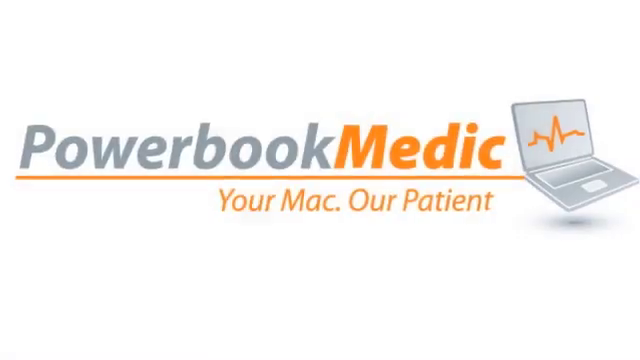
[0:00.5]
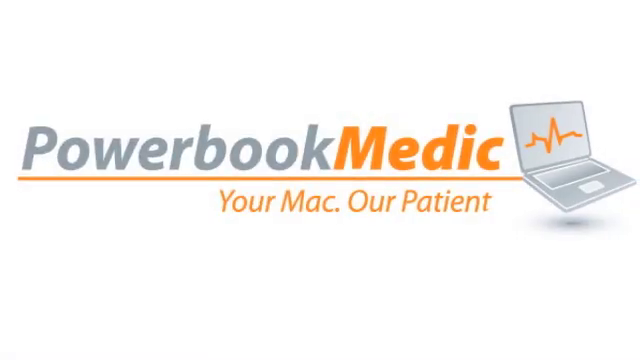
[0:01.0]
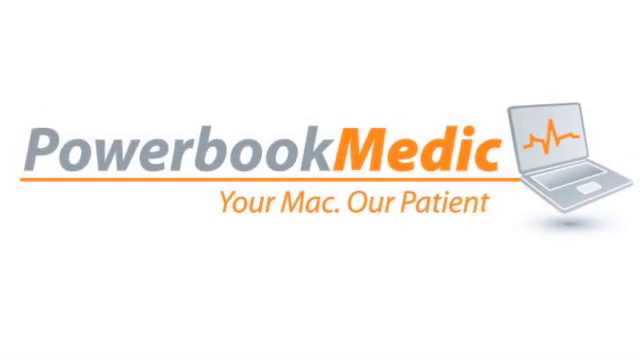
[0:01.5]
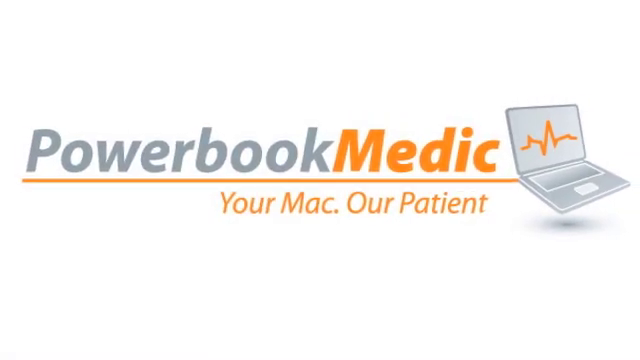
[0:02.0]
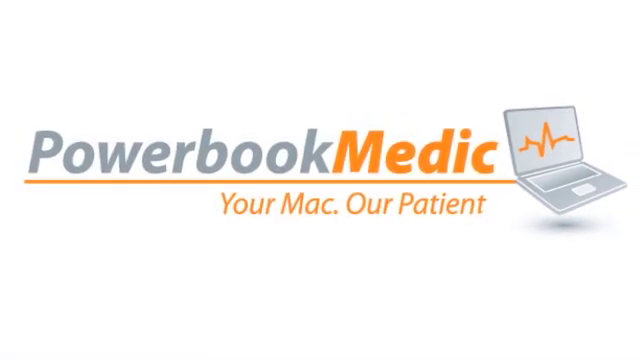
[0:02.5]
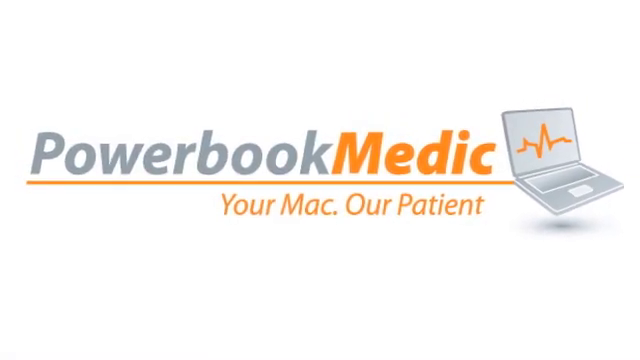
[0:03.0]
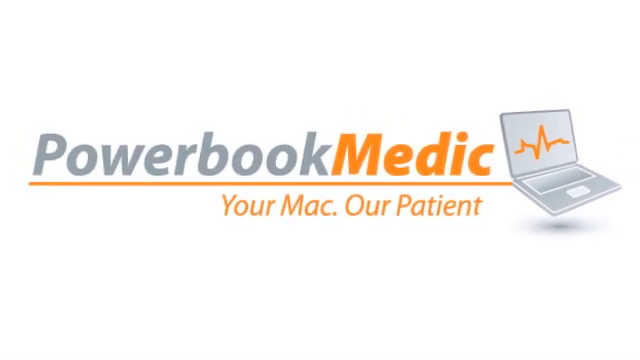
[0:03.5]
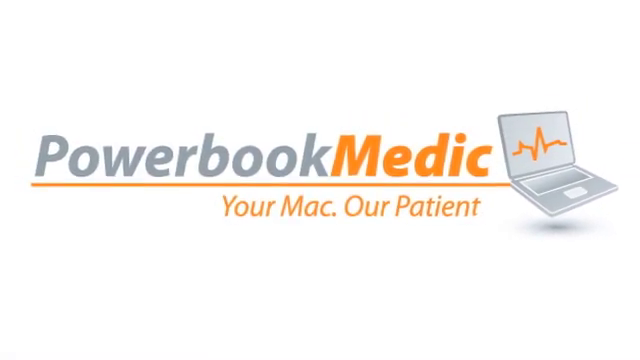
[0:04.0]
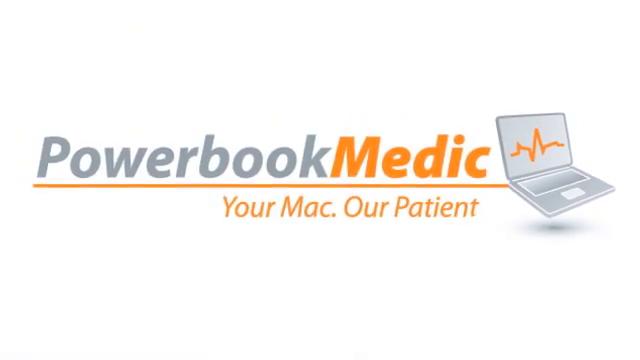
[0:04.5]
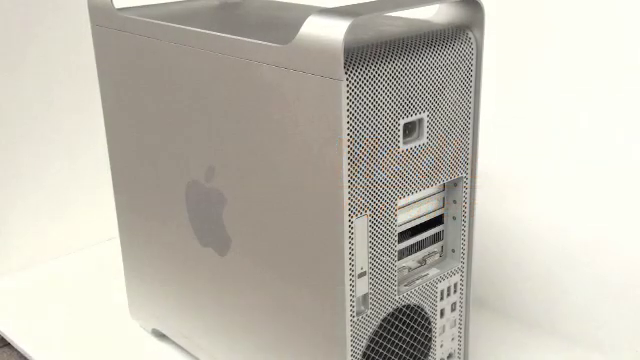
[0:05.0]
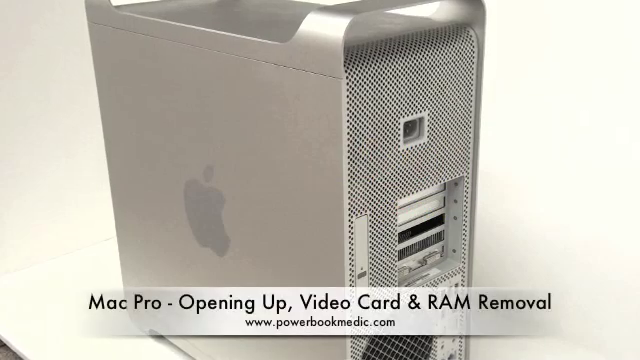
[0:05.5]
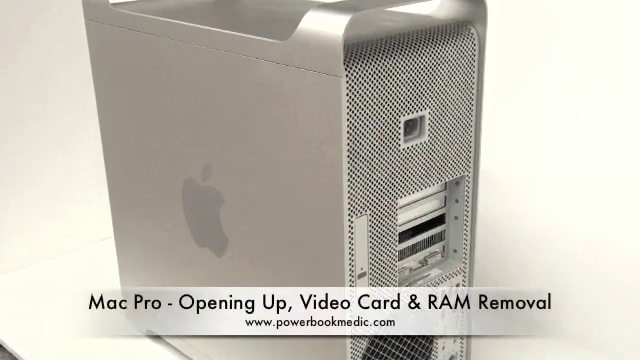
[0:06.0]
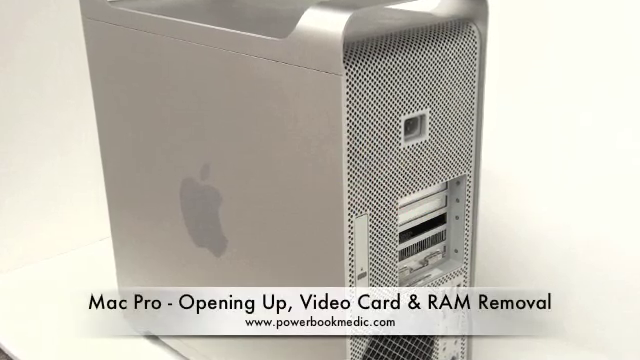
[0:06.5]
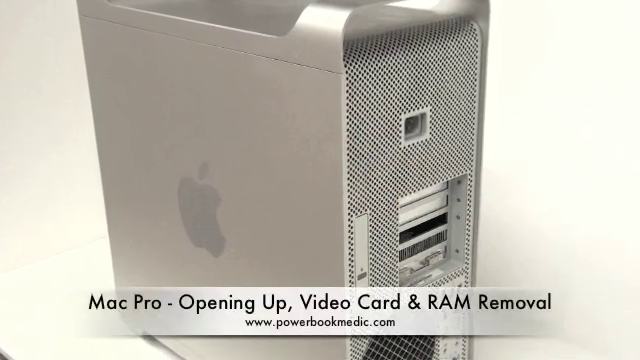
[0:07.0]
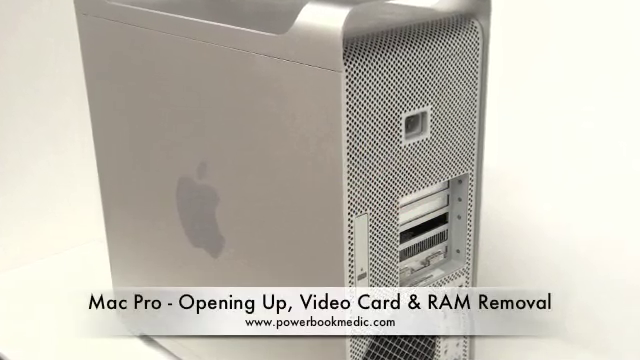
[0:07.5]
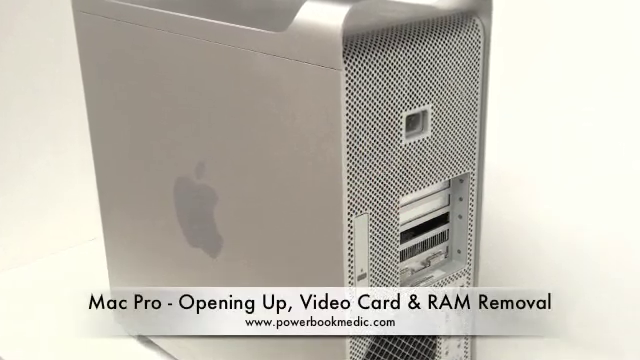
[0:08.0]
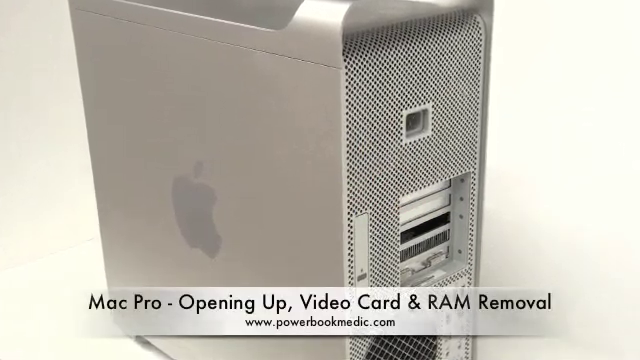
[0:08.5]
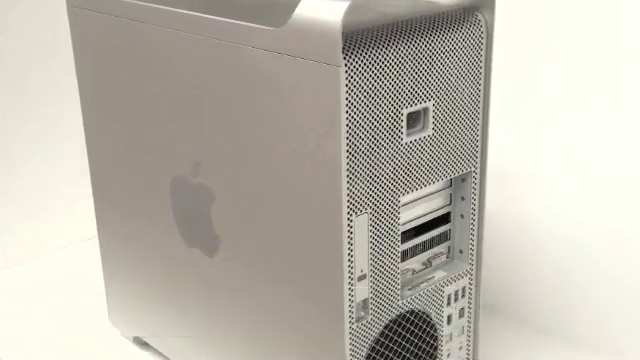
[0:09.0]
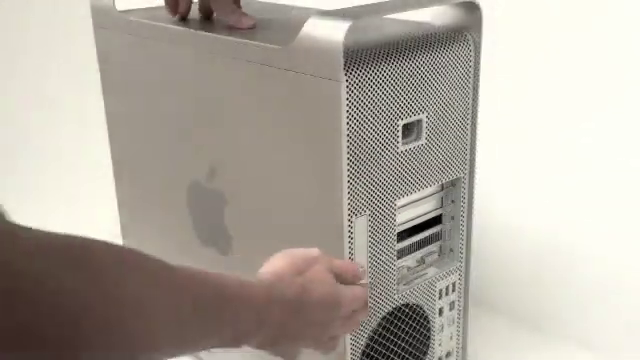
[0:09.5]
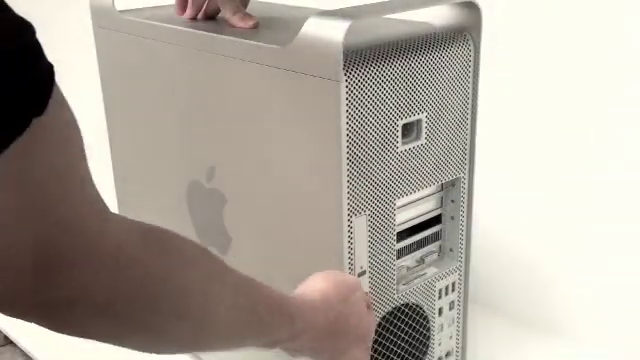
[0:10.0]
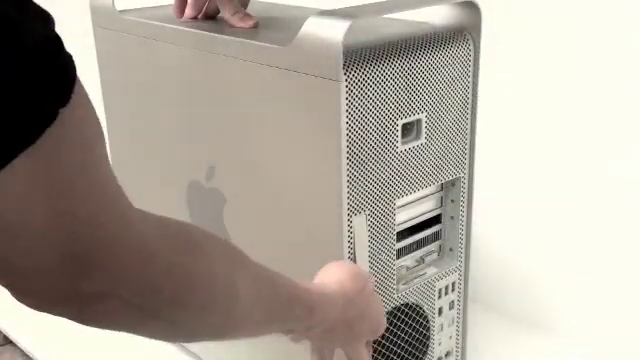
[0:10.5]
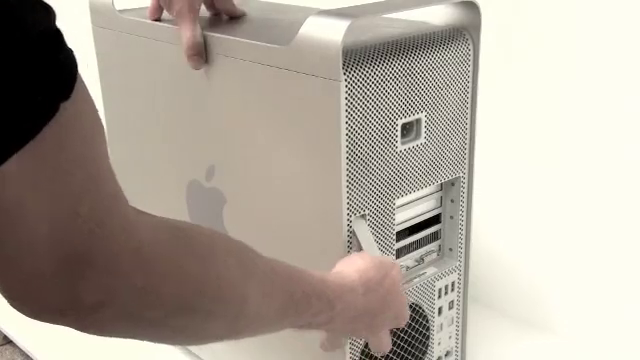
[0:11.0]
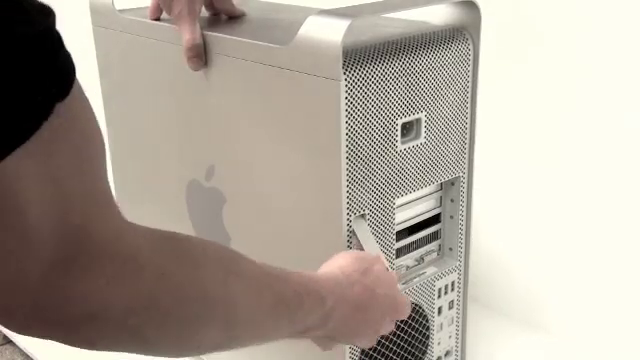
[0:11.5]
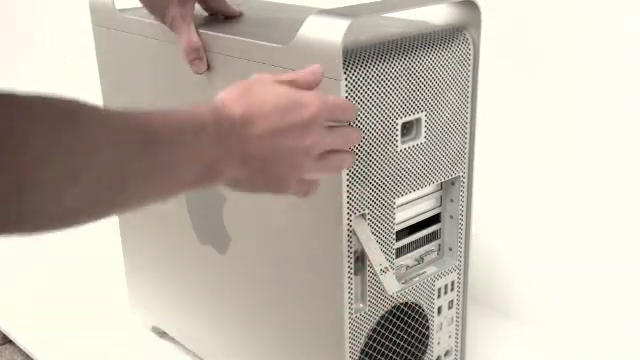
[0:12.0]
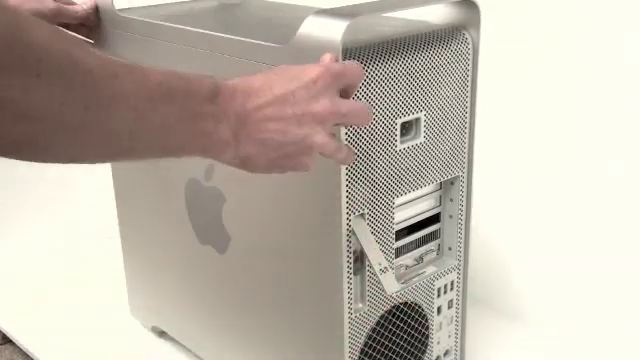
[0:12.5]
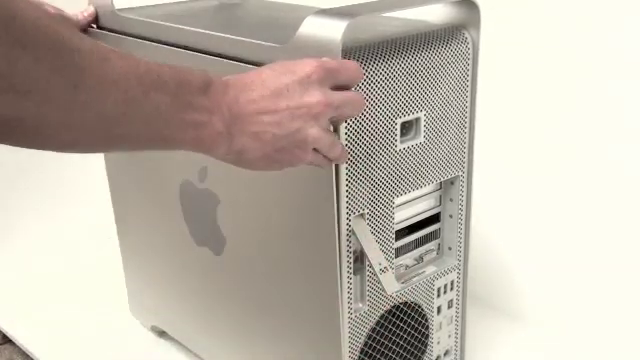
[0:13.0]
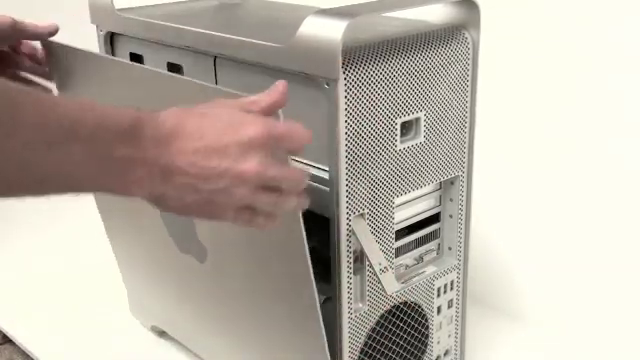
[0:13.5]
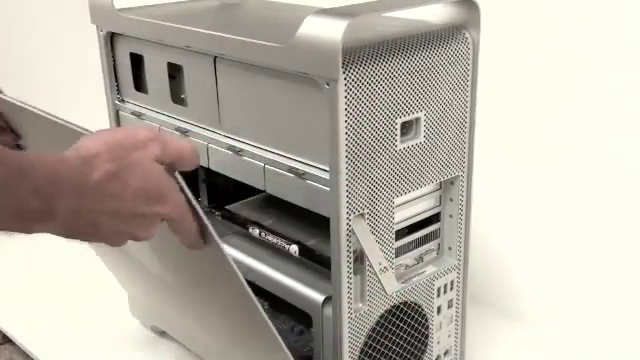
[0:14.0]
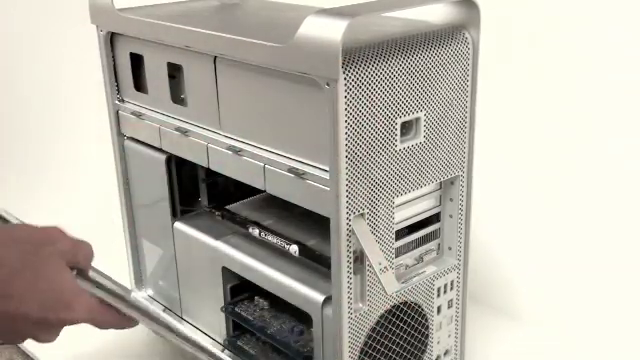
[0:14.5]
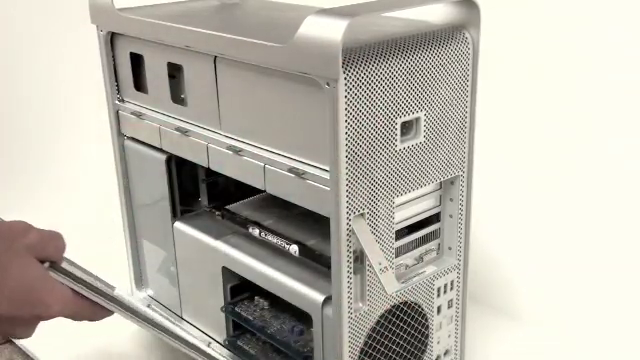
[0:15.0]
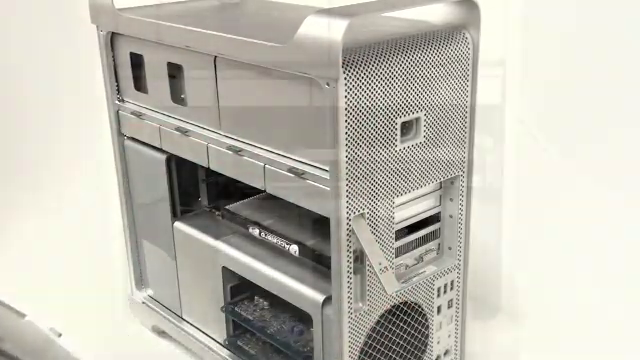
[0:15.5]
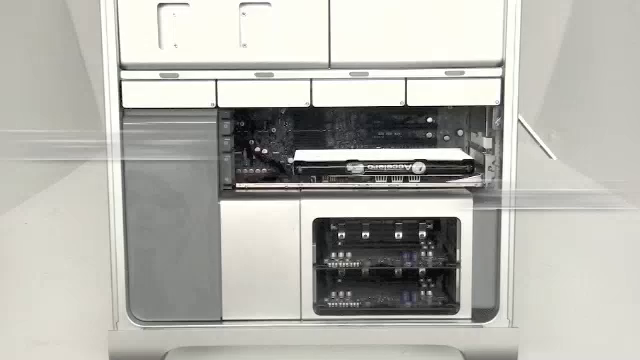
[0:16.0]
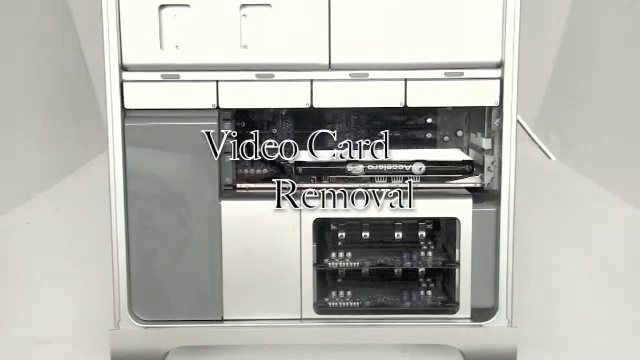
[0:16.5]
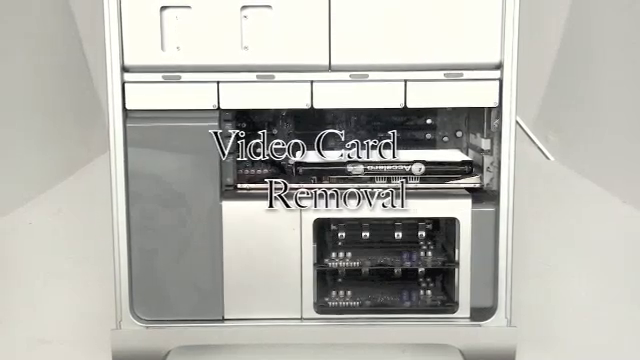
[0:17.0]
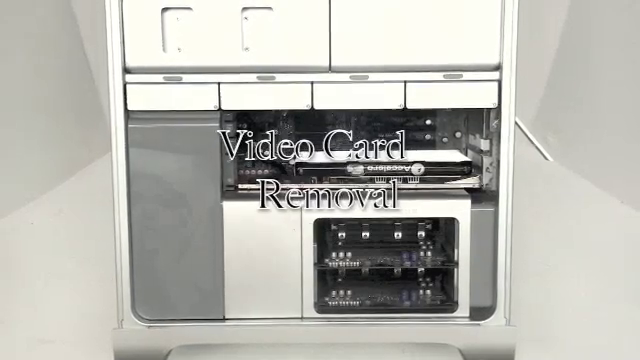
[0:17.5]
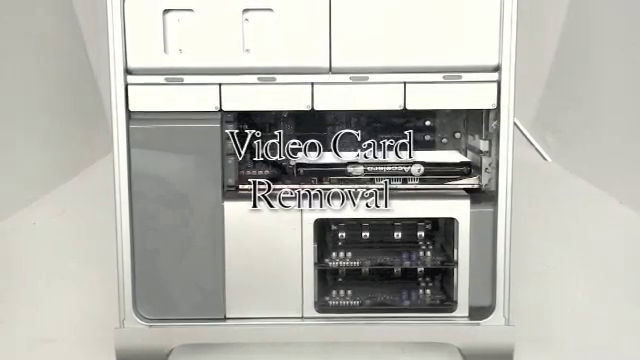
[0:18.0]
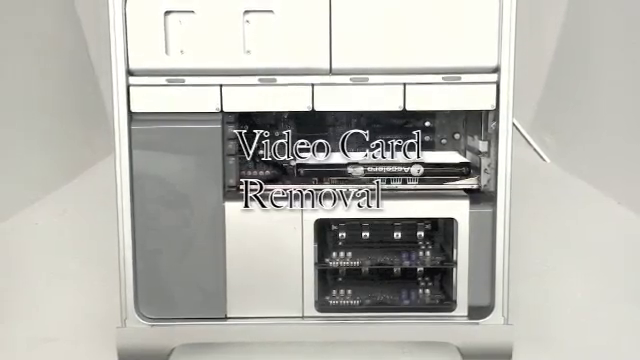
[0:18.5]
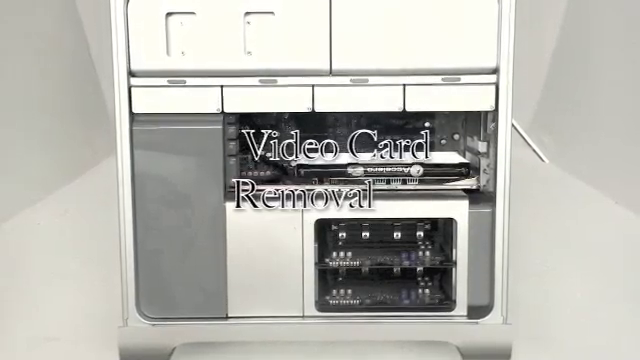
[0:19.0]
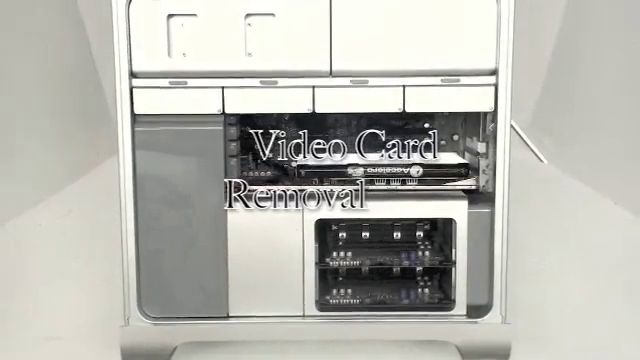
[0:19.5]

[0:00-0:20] The video opens on a white background with the logo for PowerBook Medic and the words "your Mac, our patient." The logo zooms back and fades out into another opening screen showing a MacBook Pro PC, labeled at the bottom "Mac Pro, opening up video card and RAM removal." The camera zooms slowly toward the PC as the bottom text disappears and fades into a still video. A man's arm comes into the frame; his left hand holds the top of the PC while his right hand opens up the side of the computer. He slowly removes the case on the side, revealing the inside. The video then switches to another scene where the text "video card removal" slides across the middle of the screen and fades out at the sides.